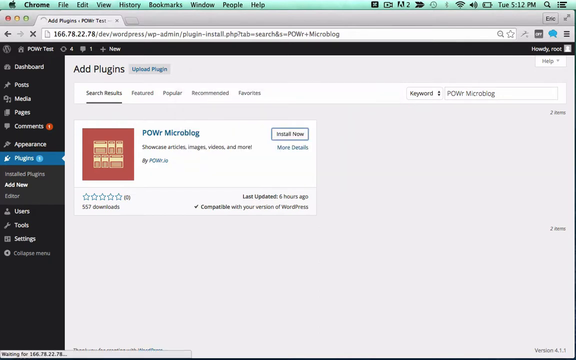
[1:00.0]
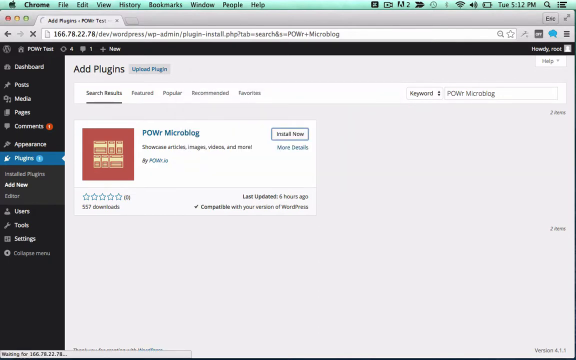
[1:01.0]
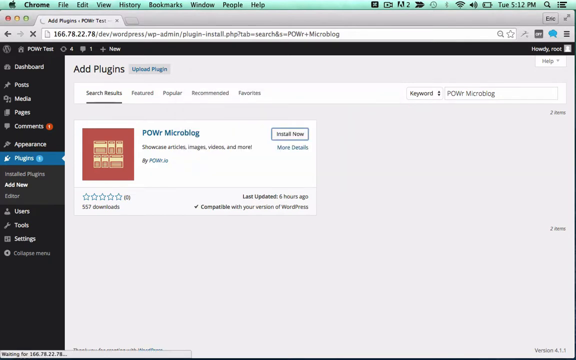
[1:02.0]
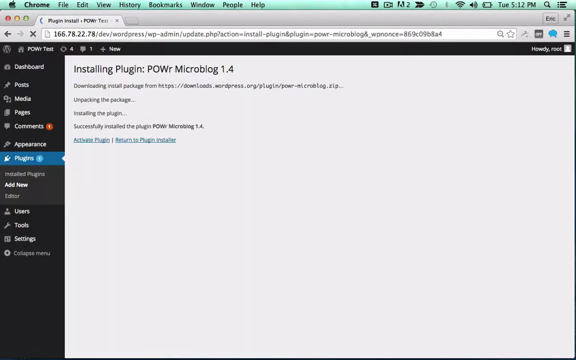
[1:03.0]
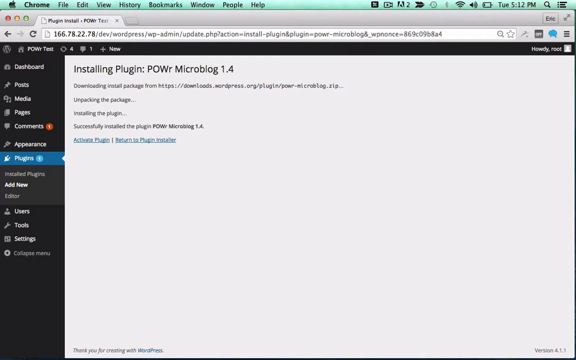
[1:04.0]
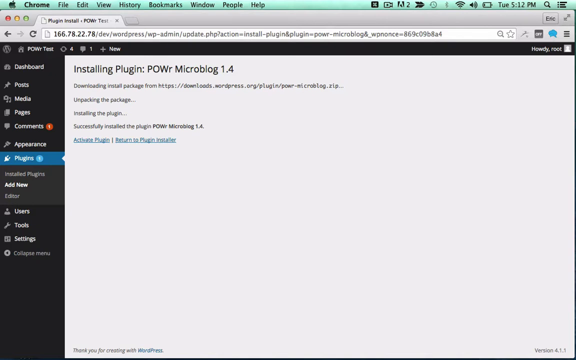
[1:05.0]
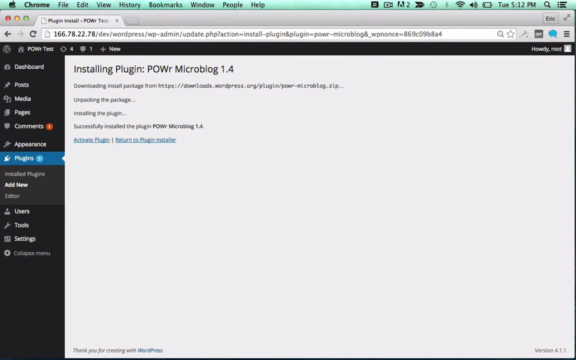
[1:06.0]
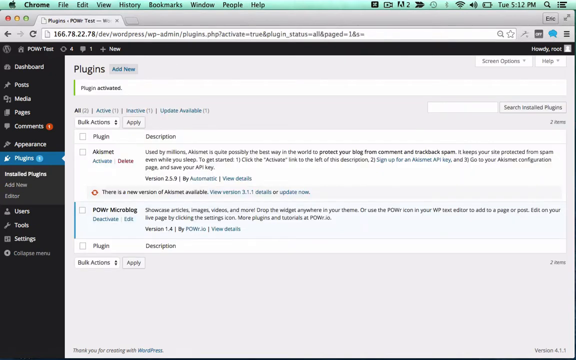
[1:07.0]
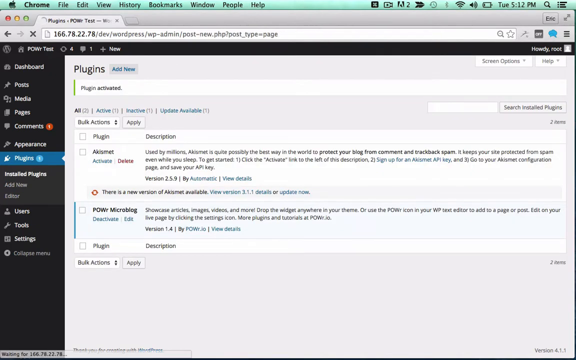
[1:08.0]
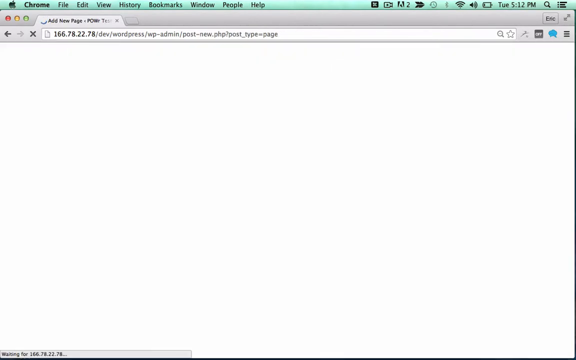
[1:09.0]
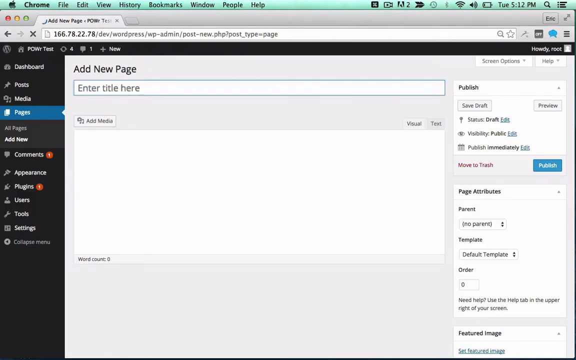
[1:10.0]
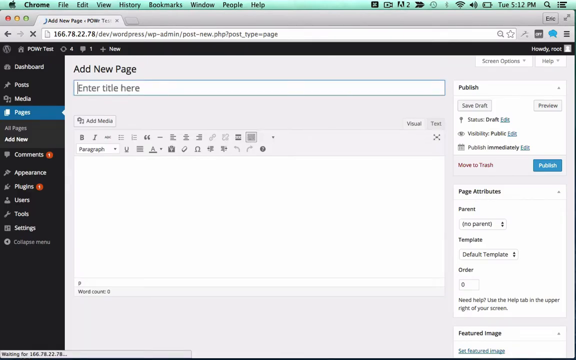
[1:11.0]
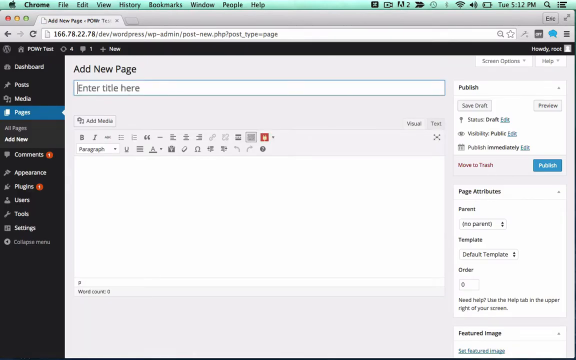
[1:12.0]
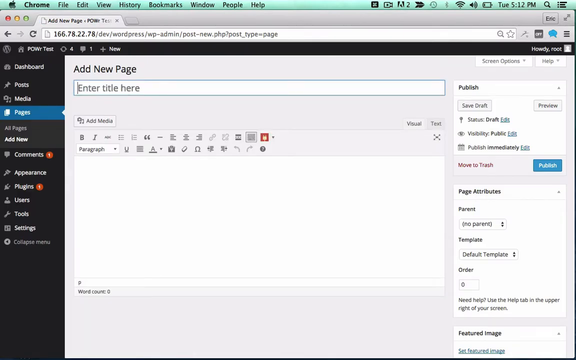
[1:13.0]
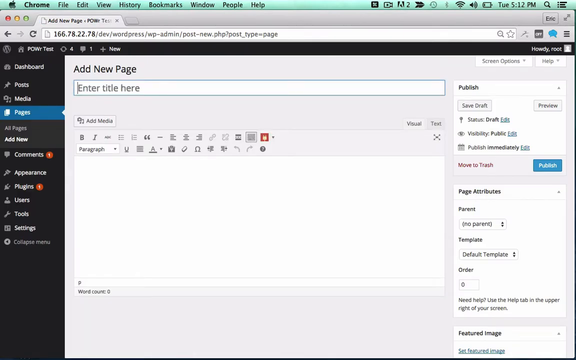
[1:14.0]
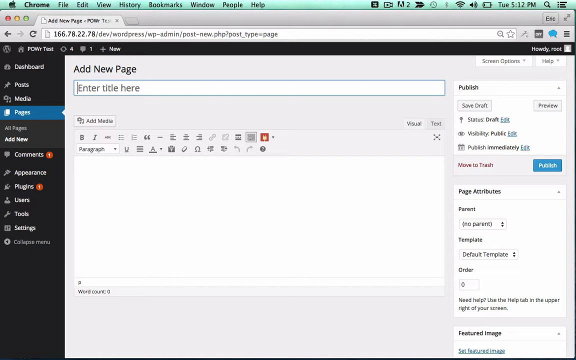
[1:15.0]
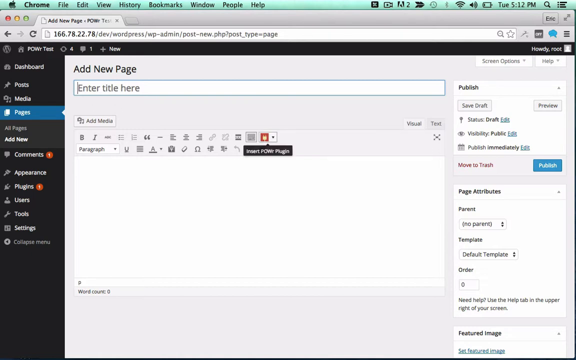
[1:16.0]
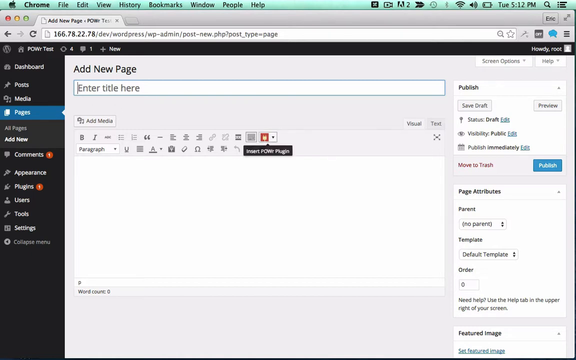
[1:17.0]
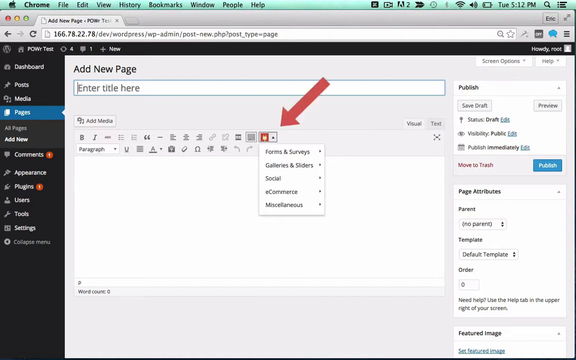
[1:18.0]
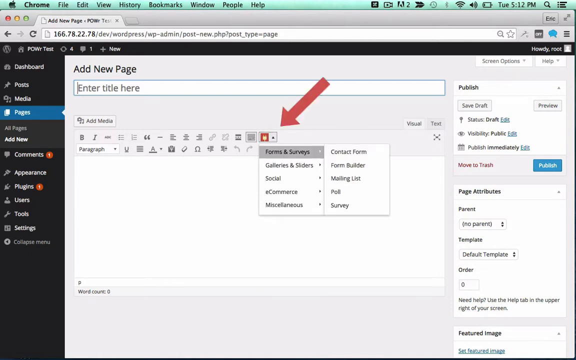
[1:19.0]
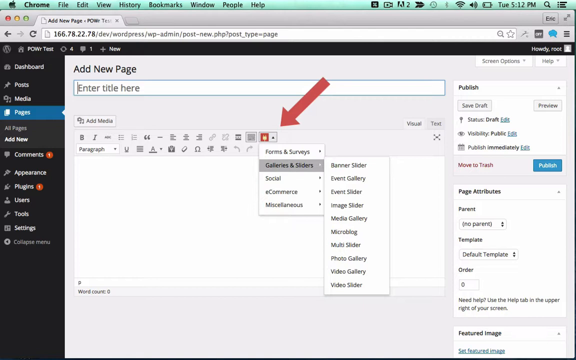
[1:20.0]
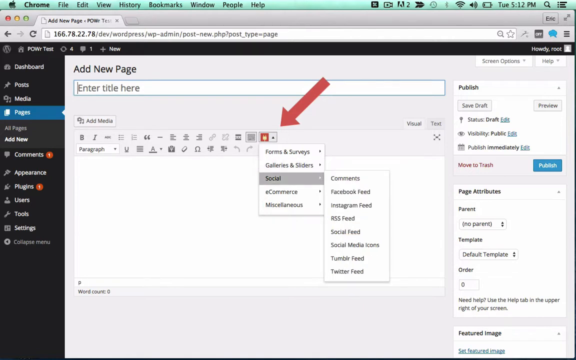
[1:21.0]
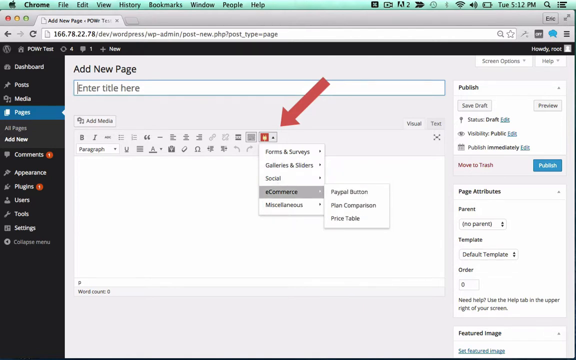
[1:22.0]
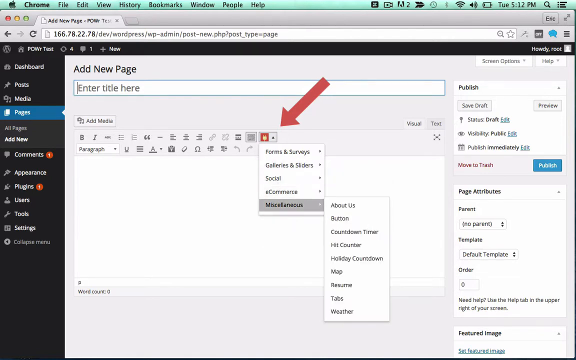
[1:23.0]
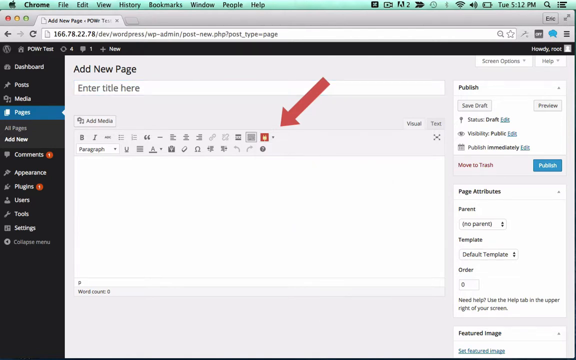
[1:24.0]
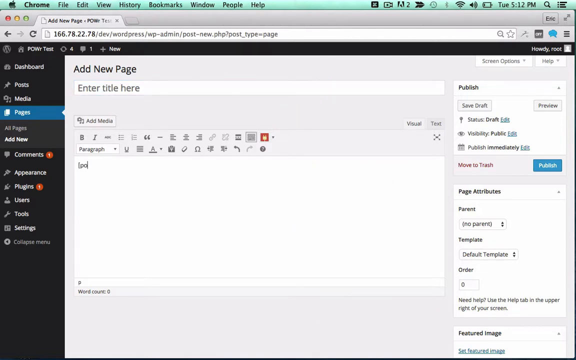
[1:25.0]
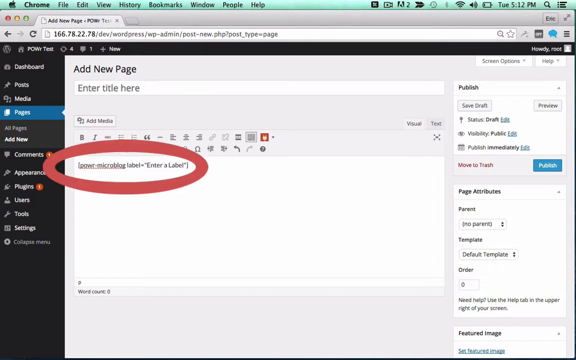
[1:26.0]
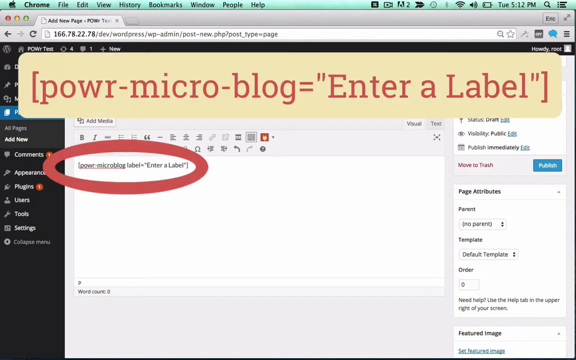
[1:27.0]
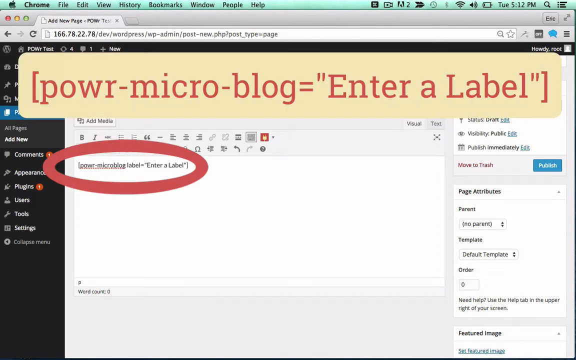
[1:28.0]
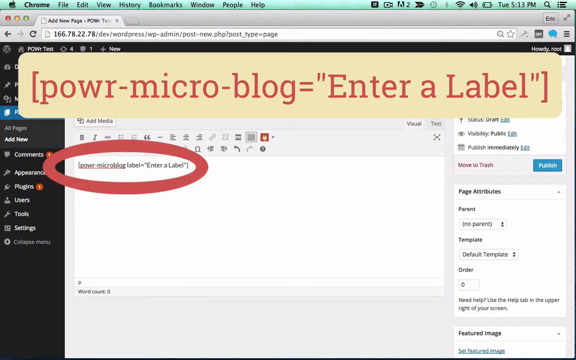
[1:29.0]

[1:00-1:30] After install now is clicked, a new screen says "installing plugin Power Microblog 1.4", "downloading install package from" followed by the website name, "unpacking the package", "installing the plugin", and "successfully installed the plugin Power Microblog 1.4". An arrow then points to activate plugin, which the person clicks. This brings up a new plugins page listing two plugins on the left, Akismet and Power Microblog, with their descriptions to the right. They open a page called add new page and are in the enter title here box before an arrow points to the insert micropower box, which they click, and they scroll down to miscellaneous. They then type in the microblog power label, enter a label, and this appears in big text on the screen so viewers can follow what to write.